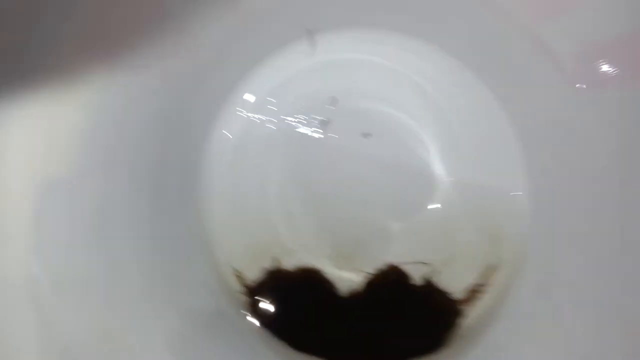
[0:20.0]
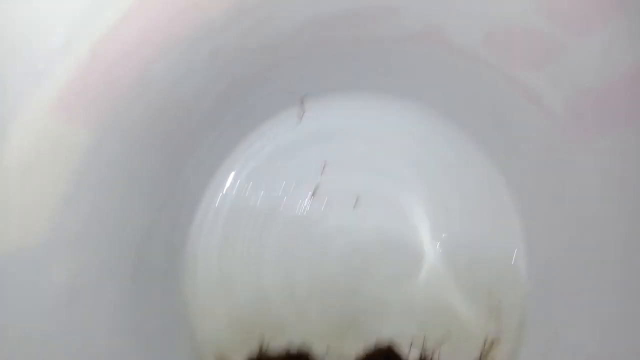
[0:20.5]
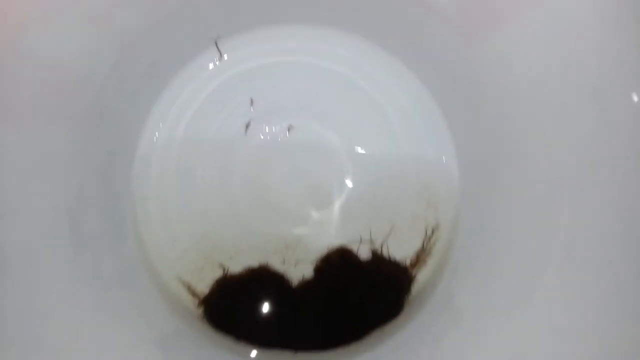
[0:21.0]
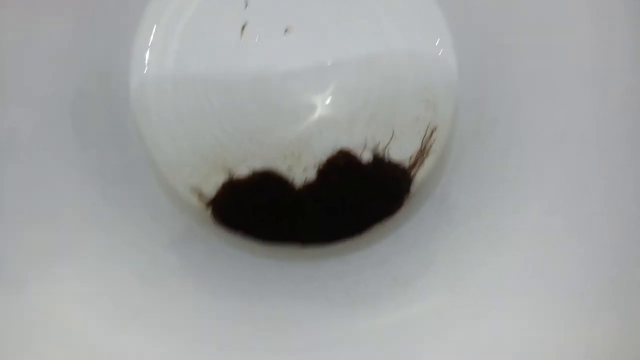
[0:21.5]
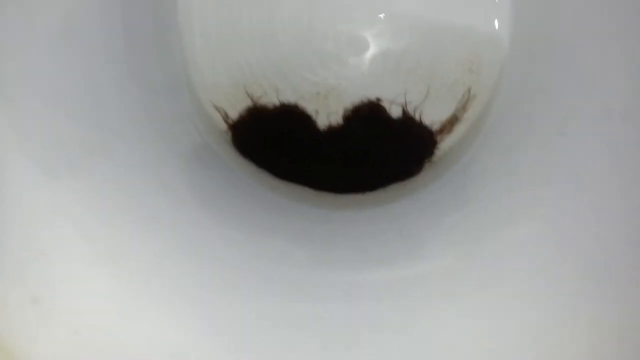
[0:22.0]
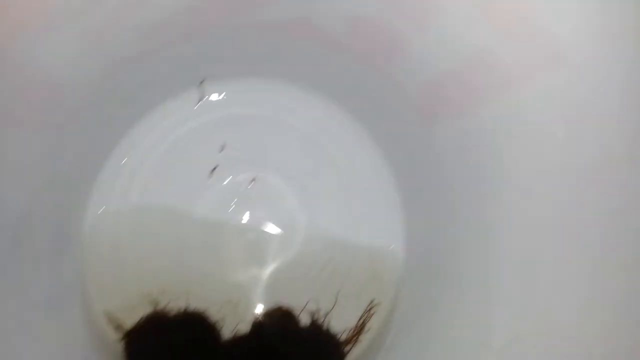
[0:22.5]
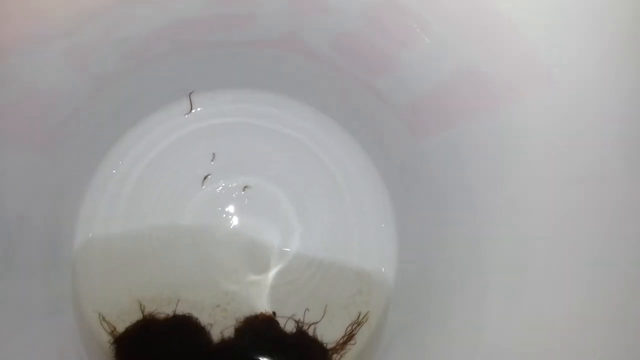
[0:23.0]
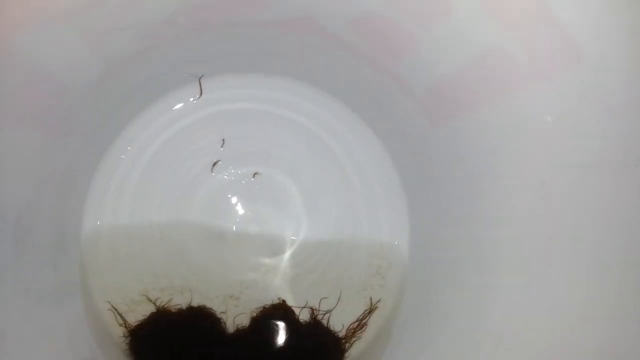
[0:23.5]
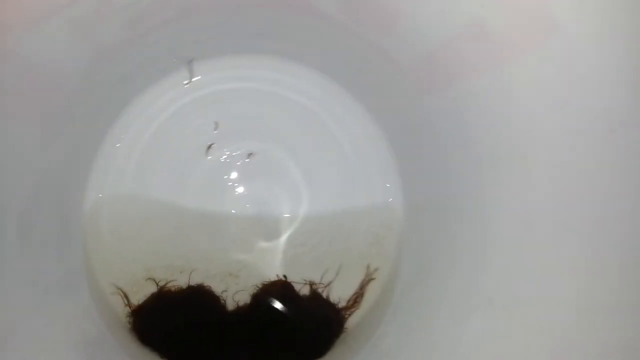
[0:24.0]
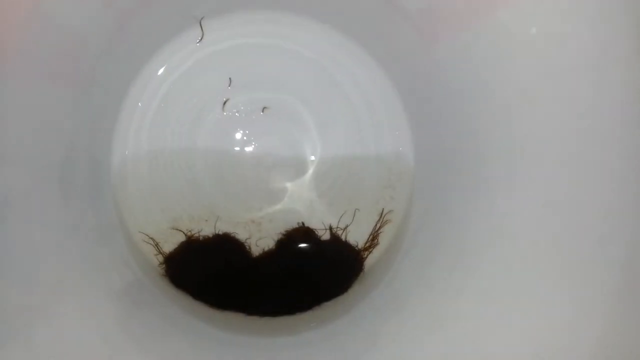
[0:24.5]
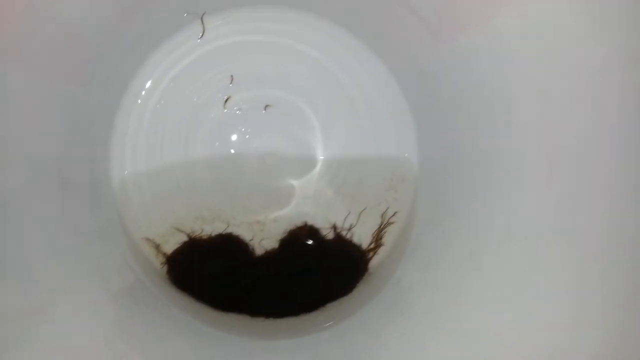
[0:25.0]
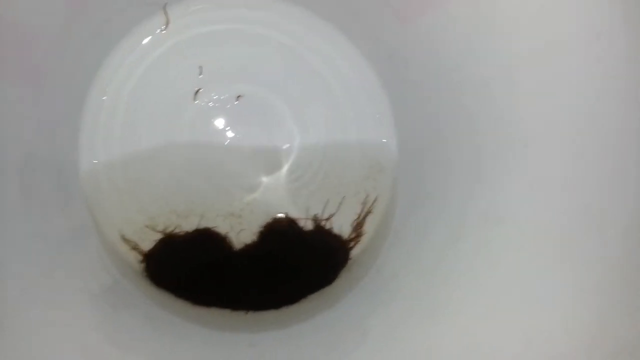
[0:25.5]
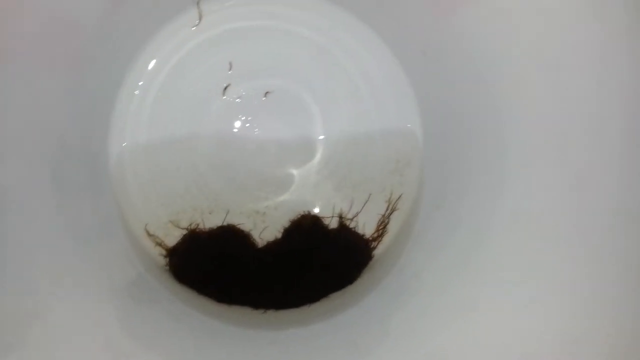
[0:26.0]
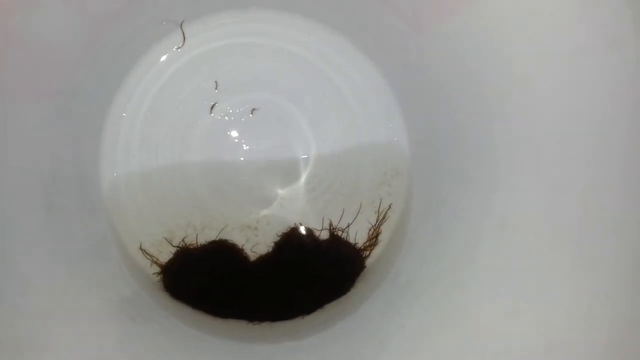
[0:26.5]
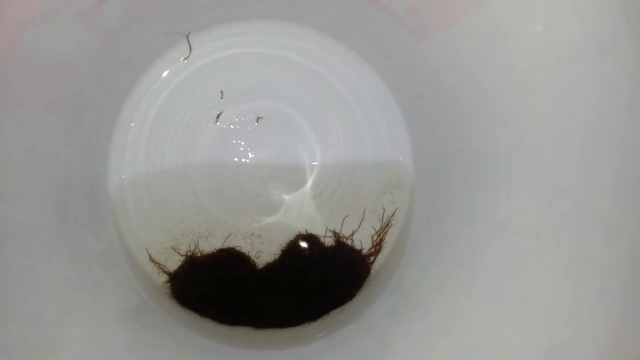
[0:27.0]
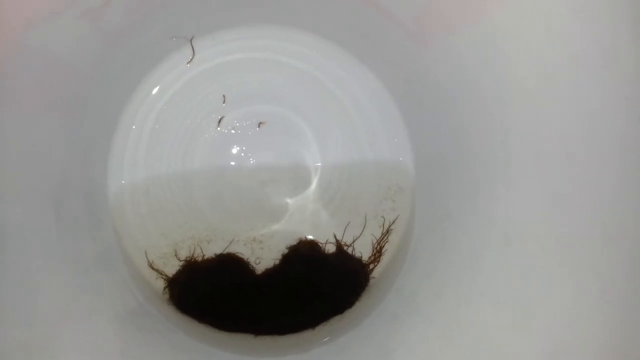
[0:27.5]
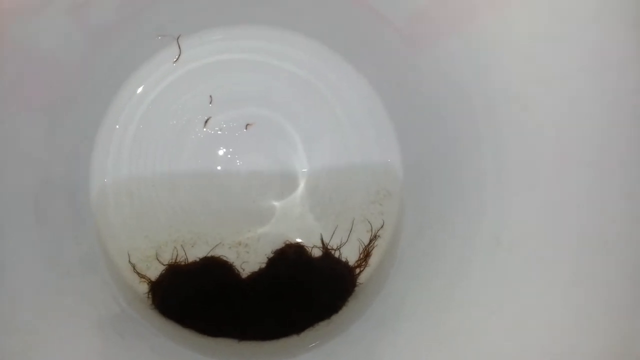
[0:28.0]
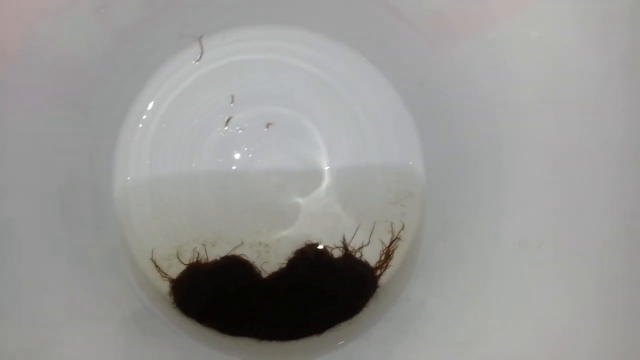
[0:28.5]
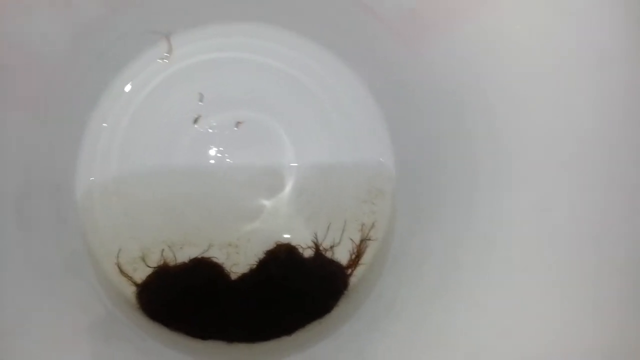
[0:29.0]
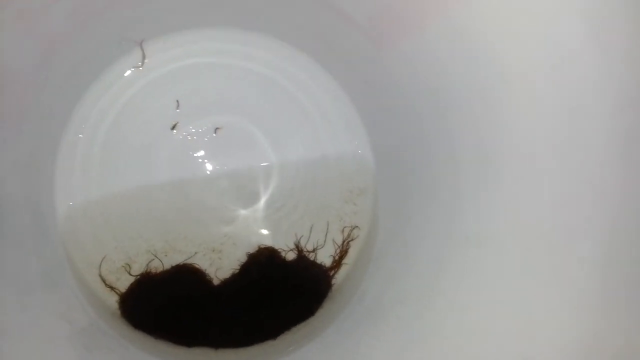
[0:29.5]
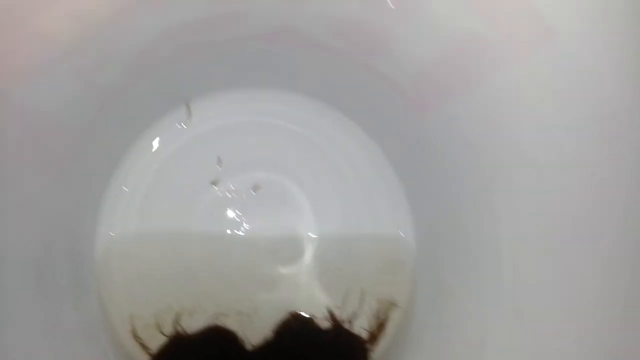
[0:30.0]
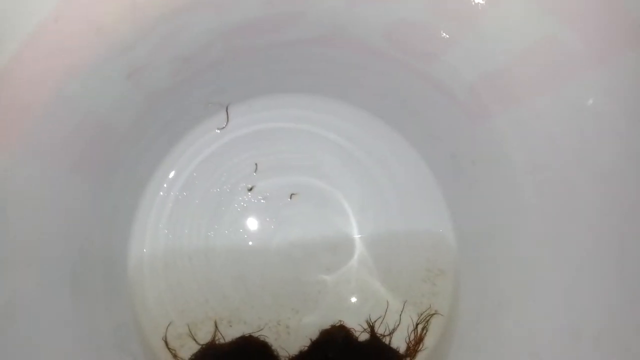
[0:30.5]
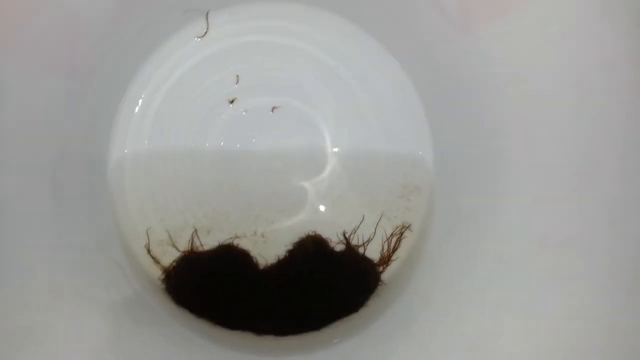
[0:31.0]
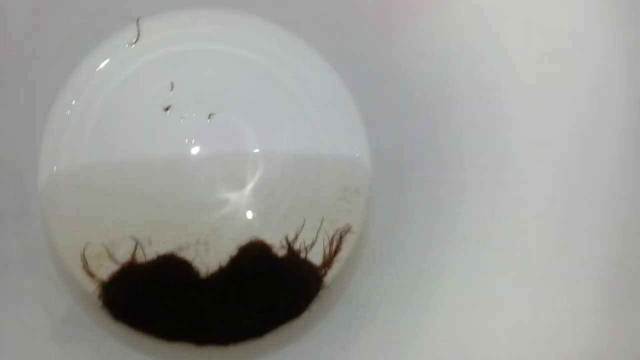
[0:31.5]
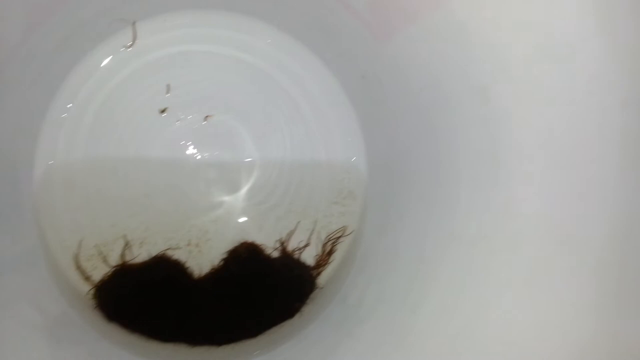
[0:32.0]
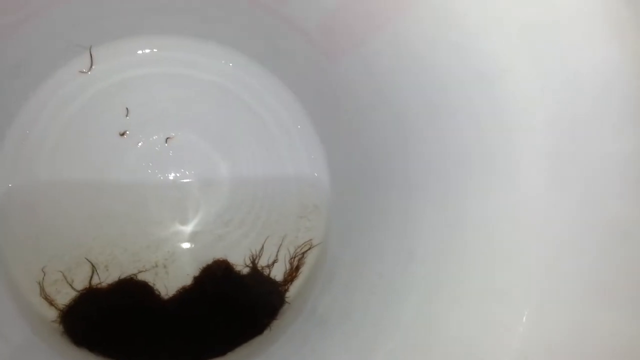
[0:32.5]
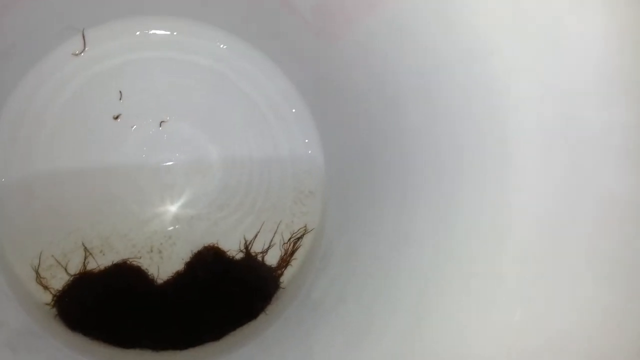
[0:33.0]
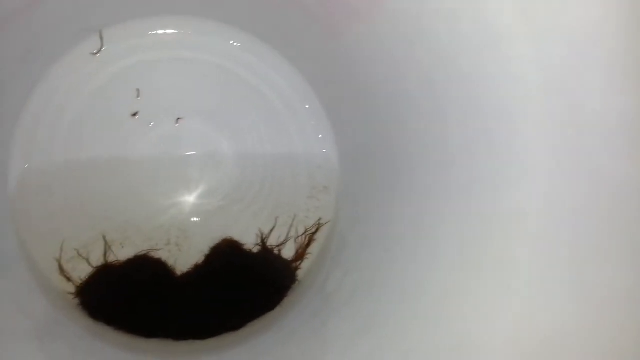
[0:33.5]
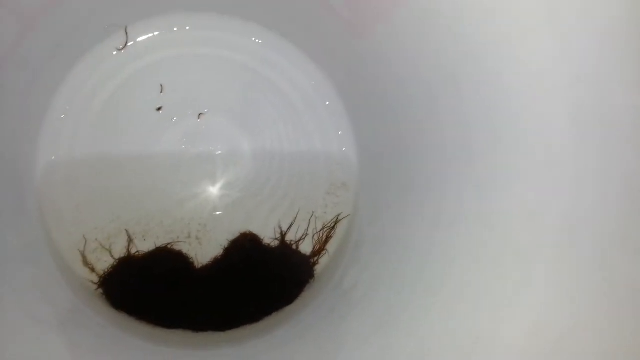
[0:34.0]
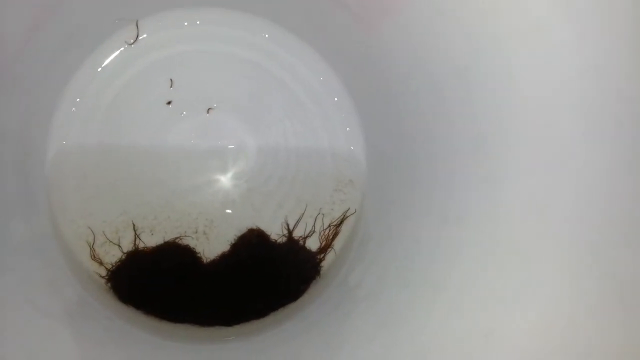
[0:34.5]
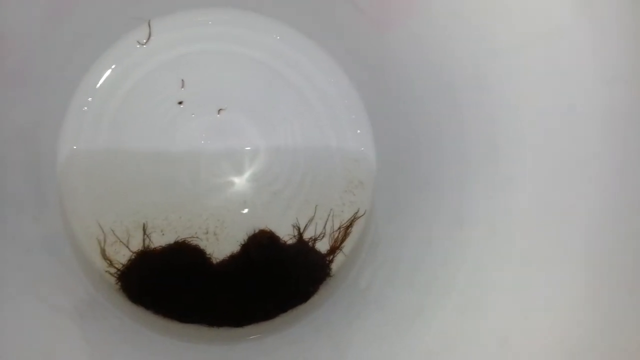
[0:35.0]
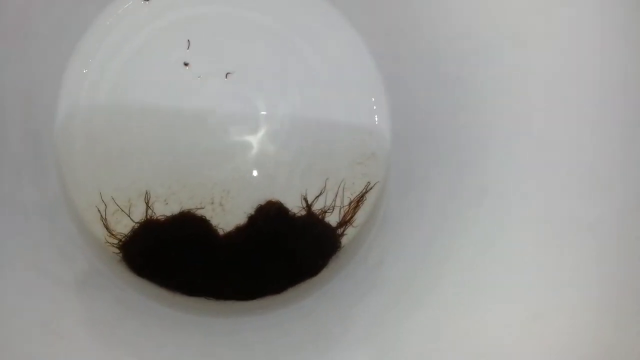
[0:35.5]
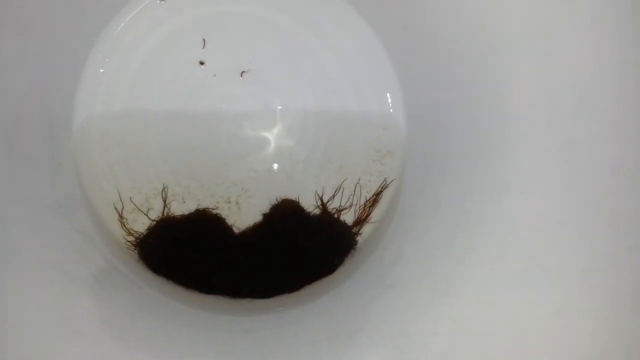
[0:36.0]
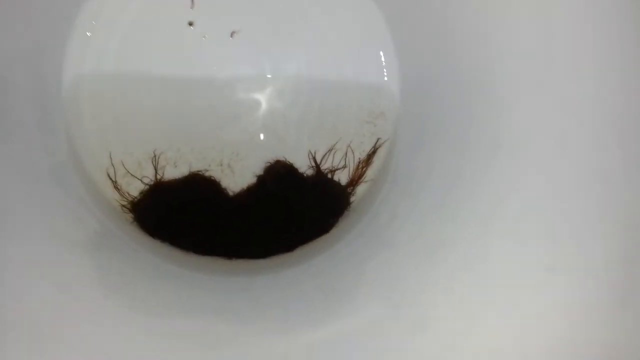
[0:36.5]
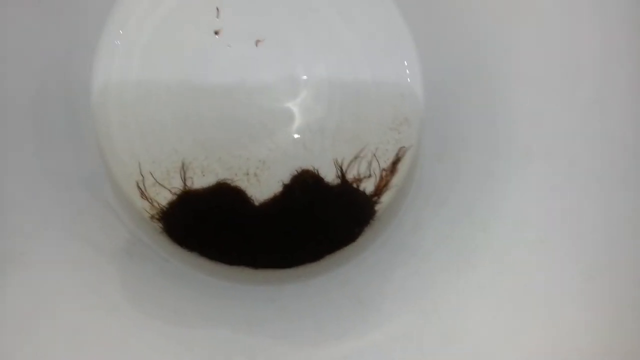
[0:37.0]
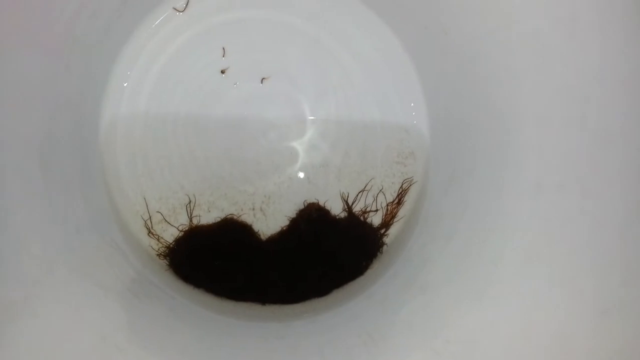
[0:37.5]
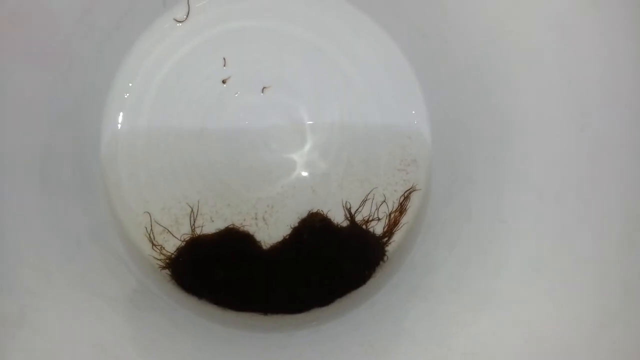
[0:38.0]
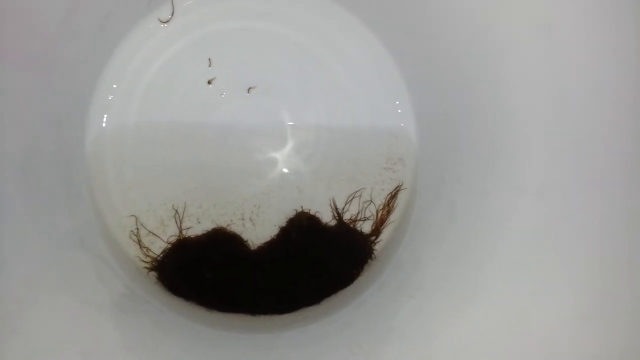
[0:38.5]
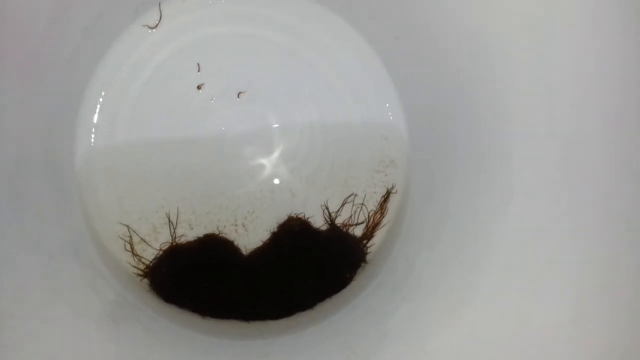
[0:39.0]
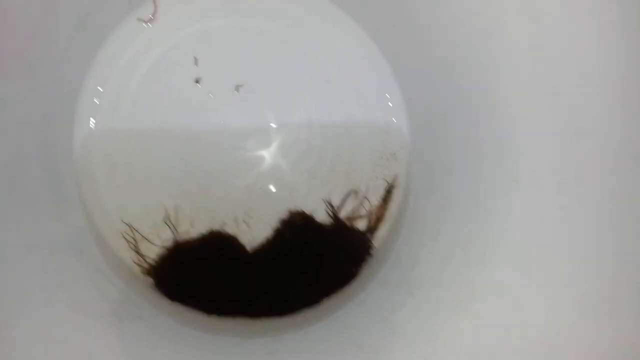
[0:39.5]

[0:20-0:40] The cup is not held still: the water shakes, moving up and down, and the cup moves up and down too. The recording device's flash is on, reflecting on the water and on the wet white walls of the cup. The algae-like substance is at the base of the cup, where it is tilted downward. The substance is wet and wobbles with the water; it has some sort of roots in it but stays still on the base. Some dirt is around it. Residues remain on the upper part of the cup where there was water before it shifted to the bottom; four chunks of these residues are big or mostly visible.